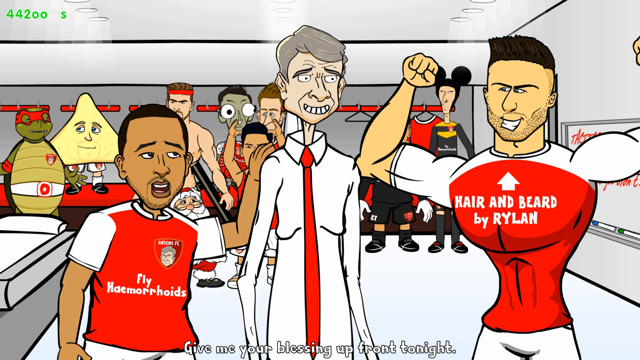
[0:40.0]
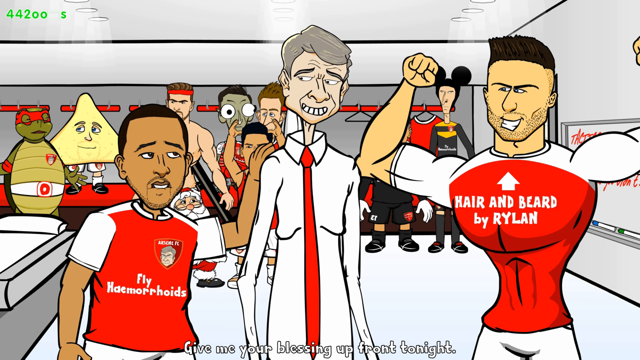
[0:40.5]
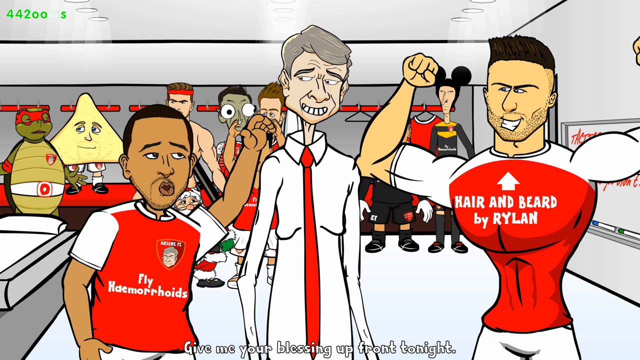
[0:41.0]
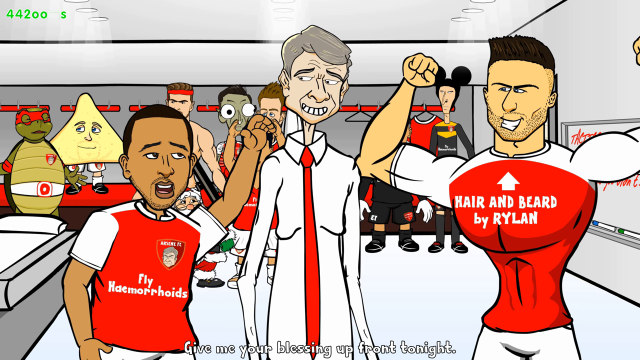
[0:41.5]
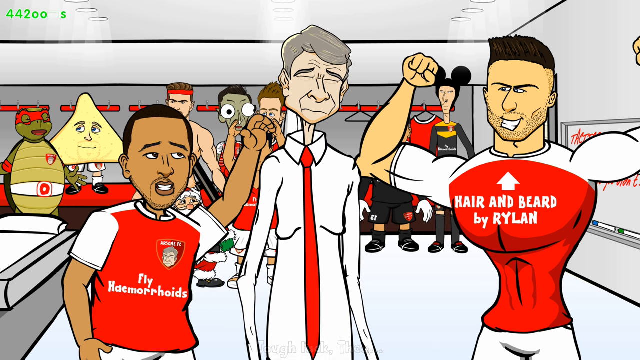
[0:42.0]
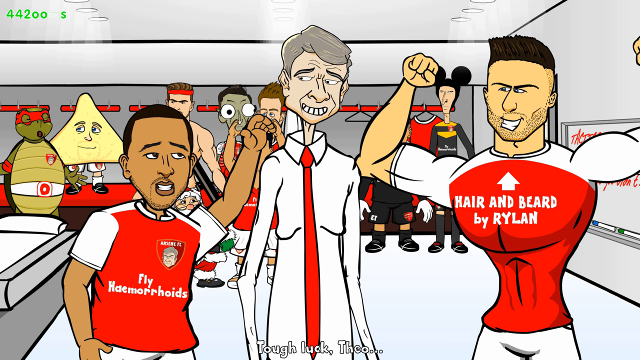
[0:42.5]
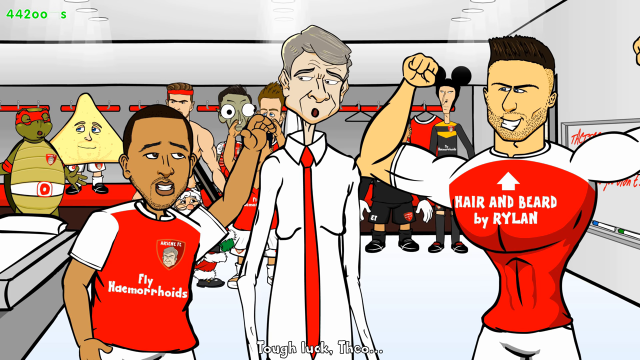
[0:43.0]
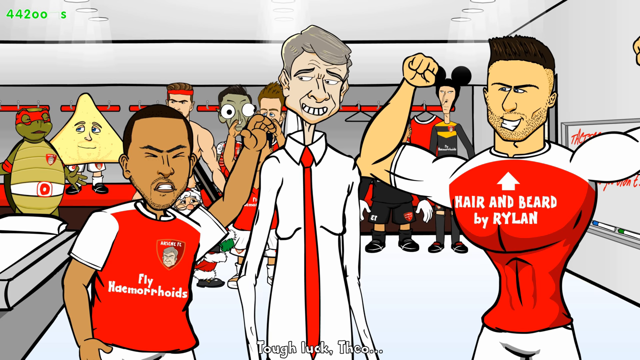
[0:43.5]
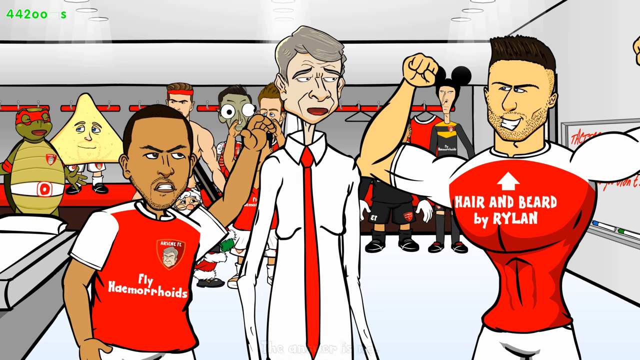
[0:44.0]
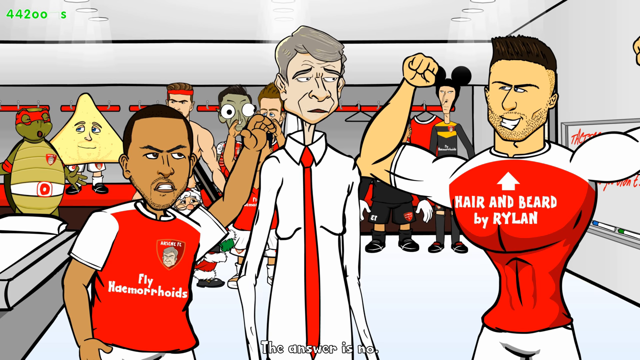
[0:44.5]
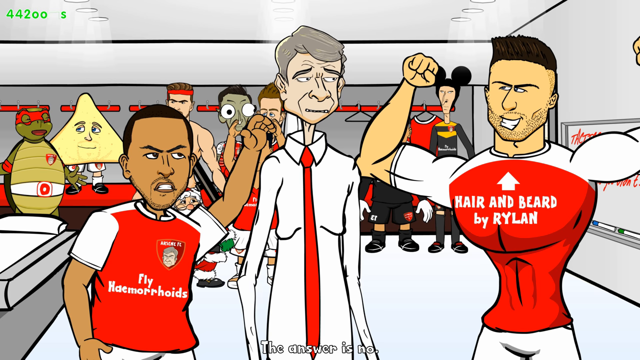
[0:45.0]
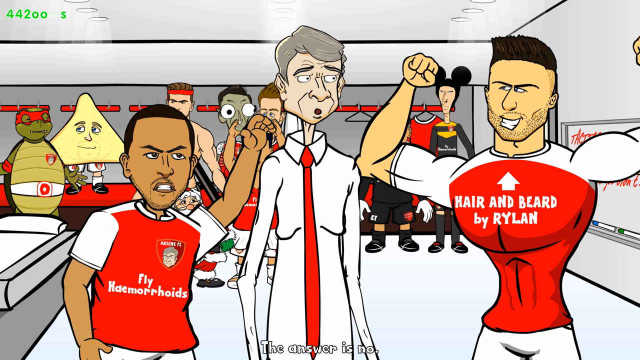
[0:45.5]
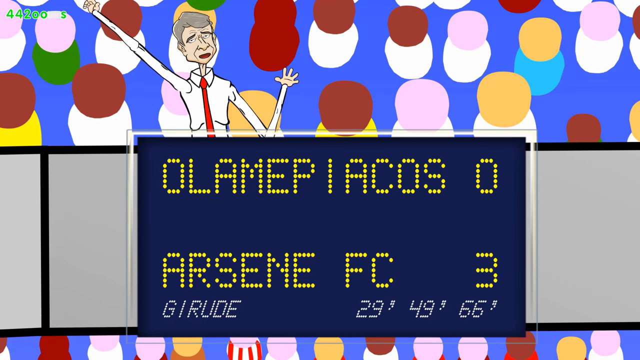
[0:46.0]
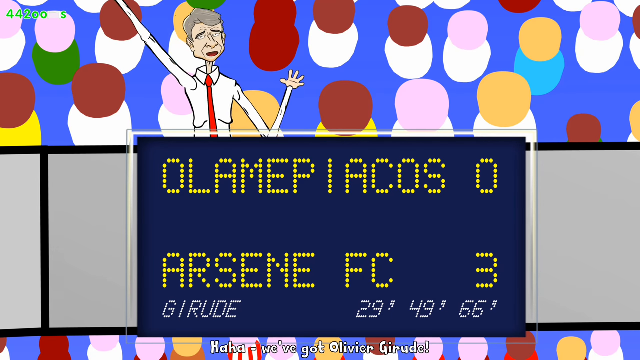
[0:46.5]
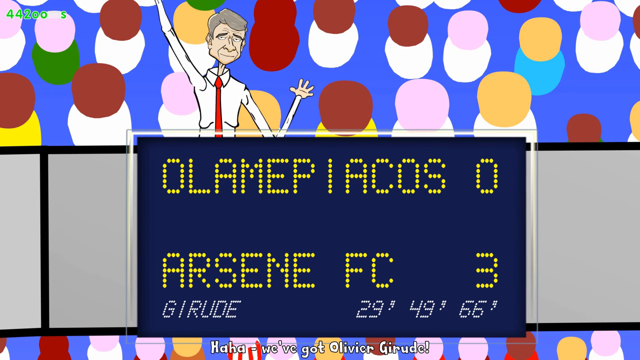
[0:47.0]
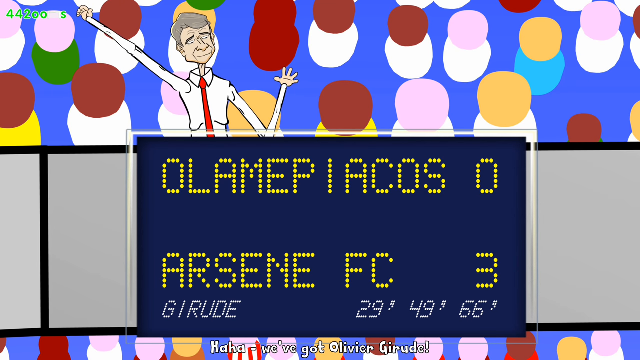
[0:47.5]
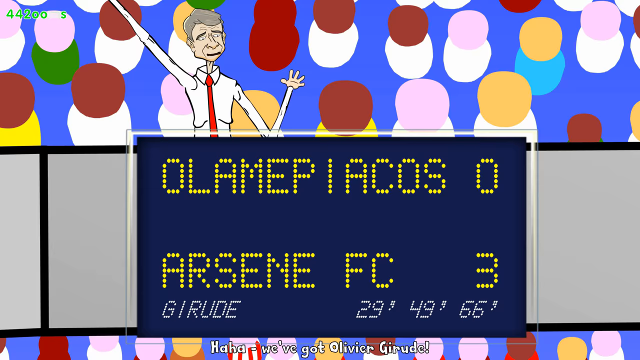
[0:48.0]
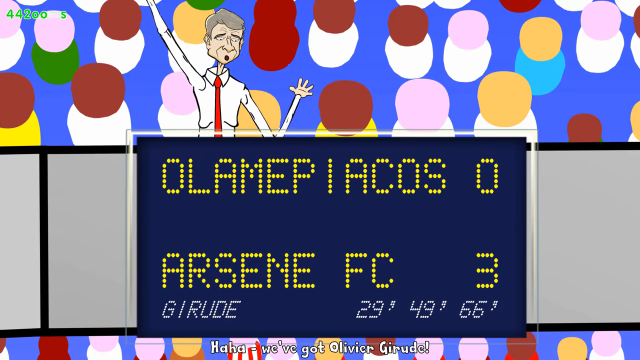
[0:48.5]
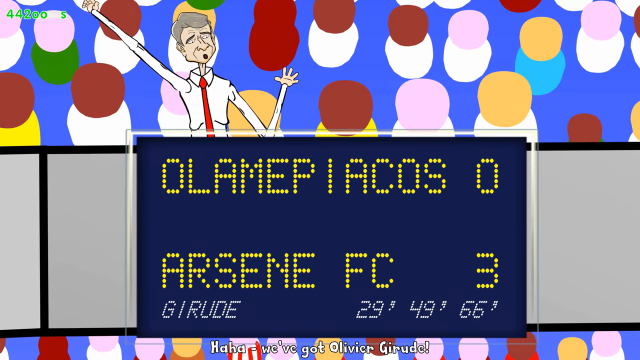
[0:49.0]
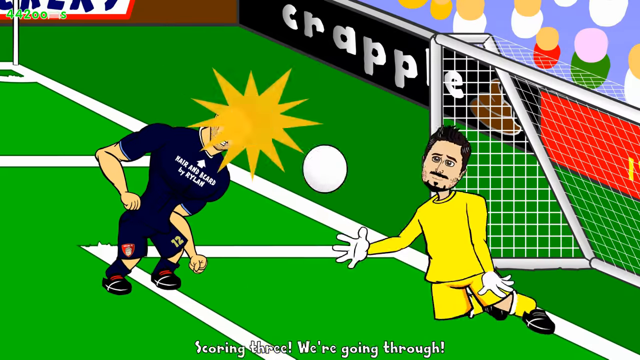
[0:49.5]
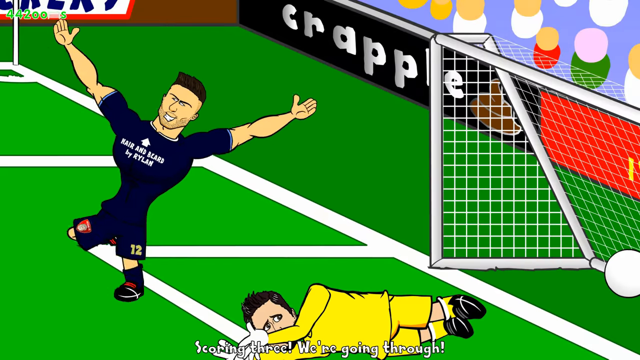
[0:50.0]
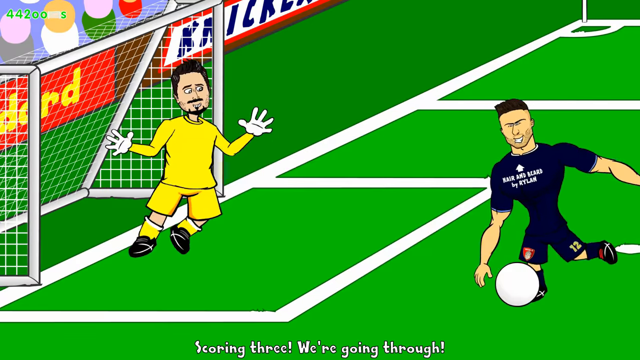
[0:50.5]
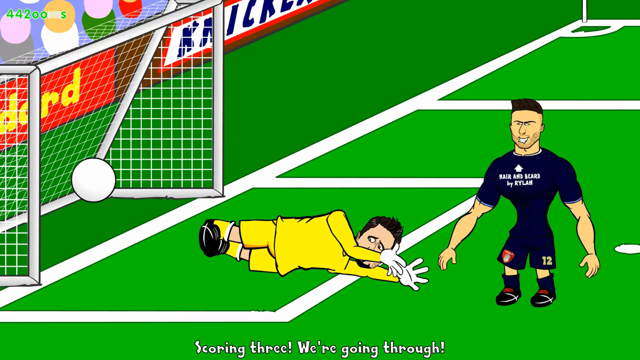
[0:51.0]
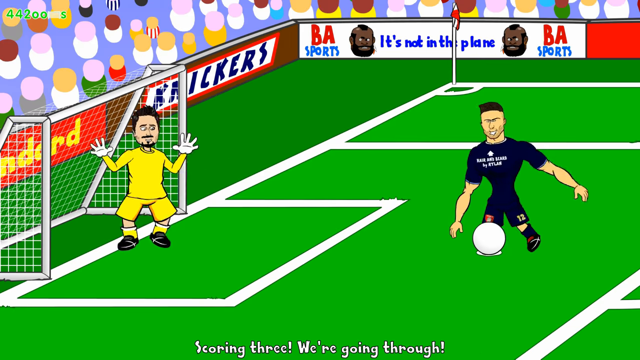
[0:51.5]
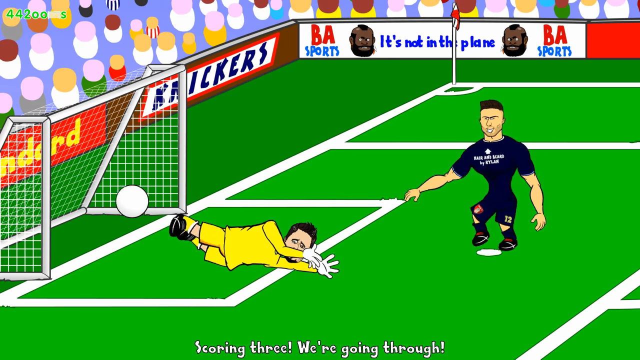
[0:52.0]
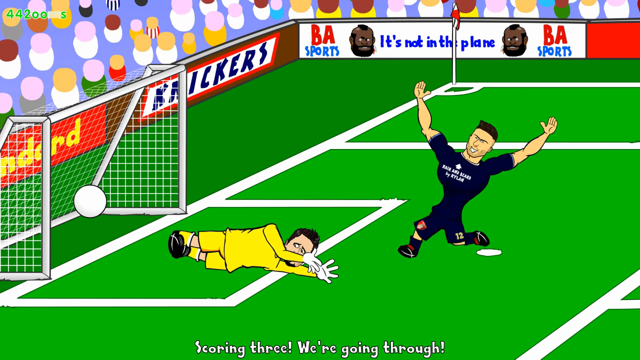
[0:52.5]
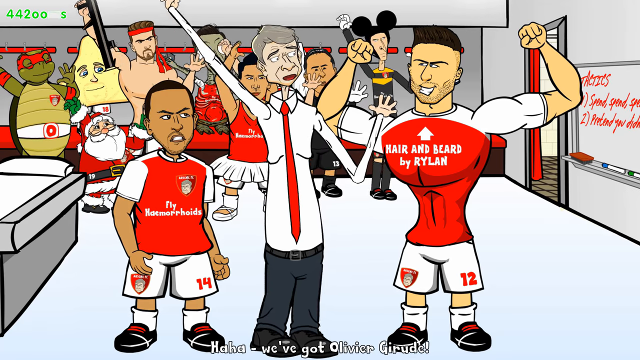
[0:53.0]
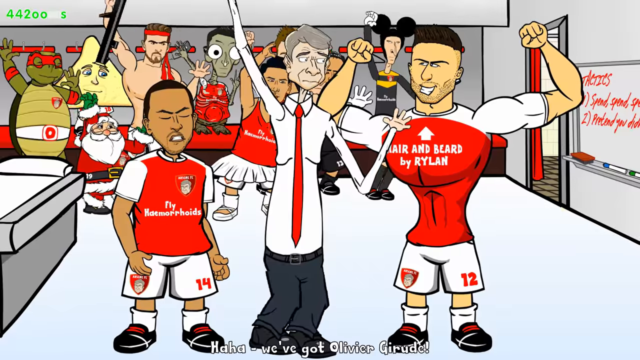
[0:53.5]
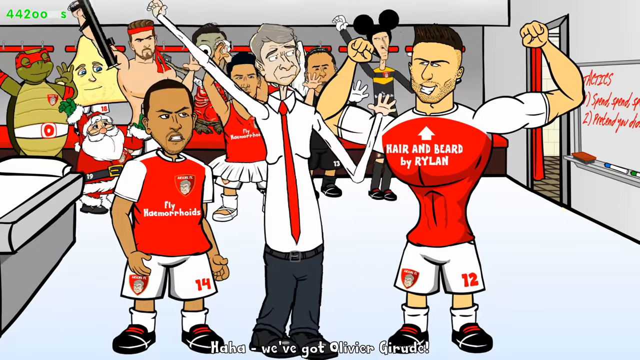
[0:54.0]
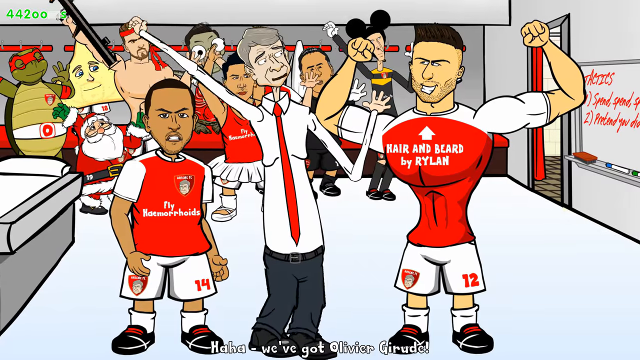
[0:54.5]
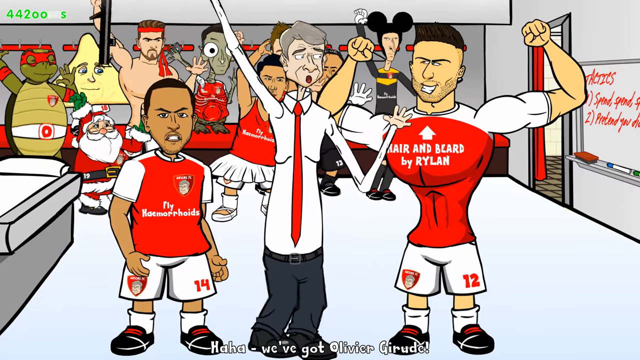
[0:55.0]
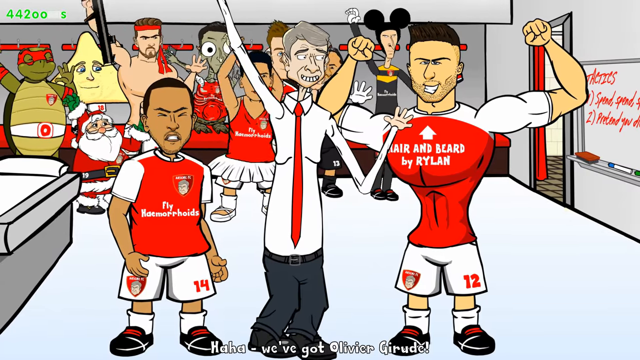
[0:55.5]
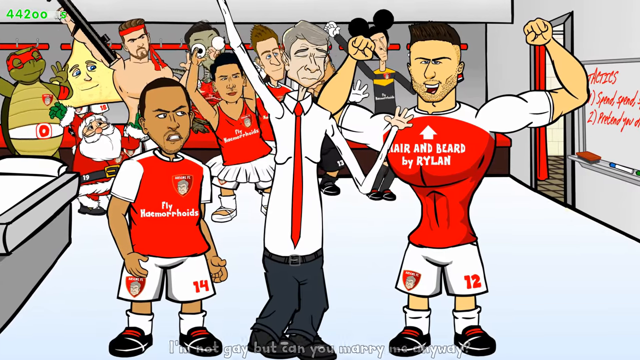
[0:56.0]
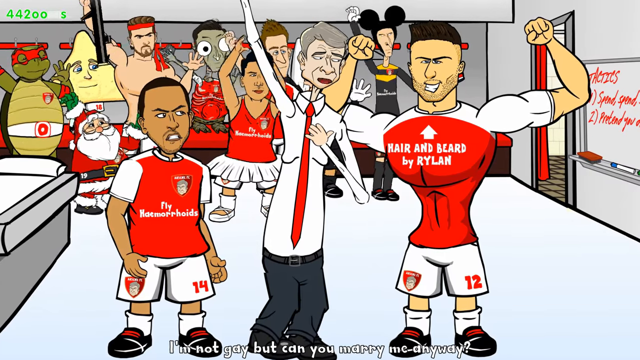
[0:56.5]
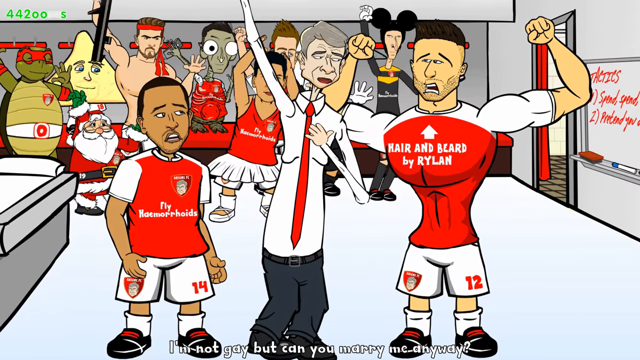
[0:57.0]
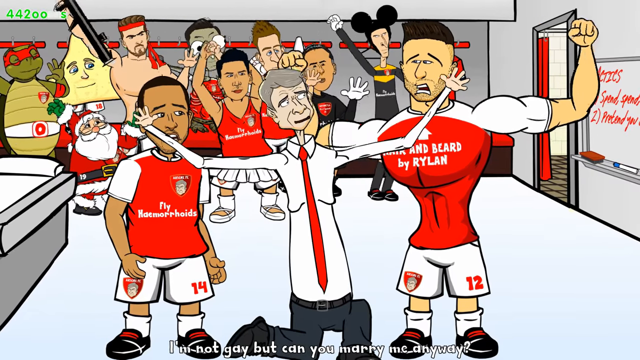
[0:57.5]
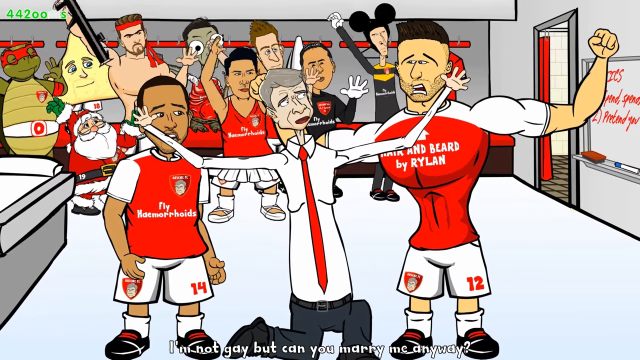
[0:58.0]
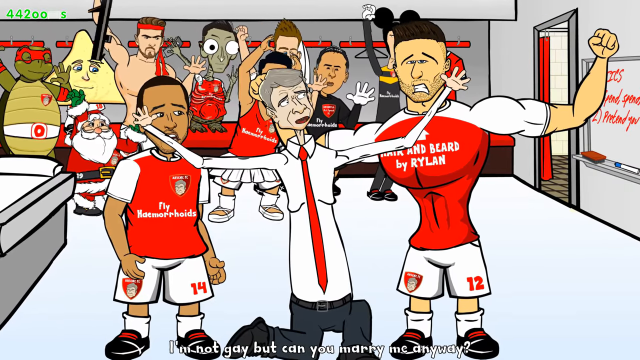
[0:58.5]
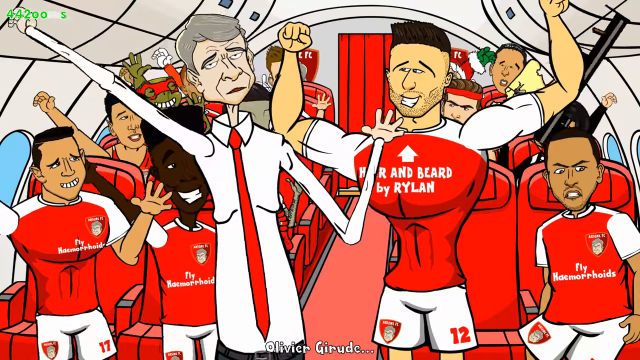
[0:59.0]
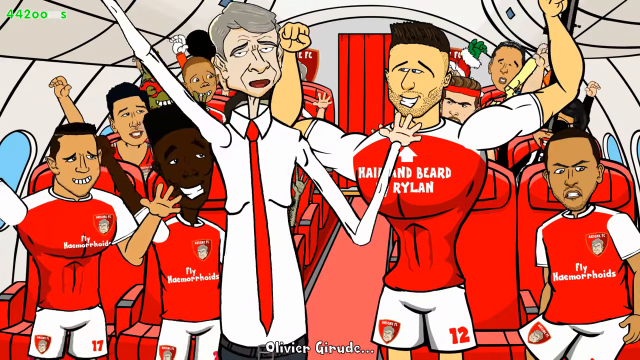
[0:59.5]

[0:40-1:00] The soccer team appears to be in the locker room, judging by the racks and hangers in the very back, with the team standing around. In the middle of the foreground is the coach with his red tie and skinny arms. To the right, the handsome, muscular player holds up his muscles, wearing a red shirt that says "hair and beard by Ryland." On his left is a smaller, Spanish-looking player whose t-shirt says "fly hemorrhoids"; with his mouth open and his hand up, he says something to the coach. The coach says something back, and the player reacts with a foul look on his face. The coach waves his arms back and forth as the play goes on, and three straight plays result in three scores by the handsome fellow on the right side.